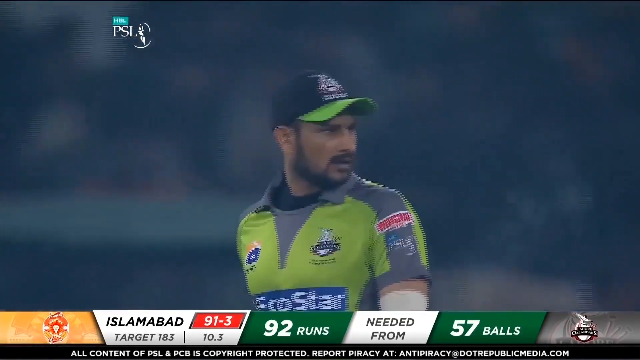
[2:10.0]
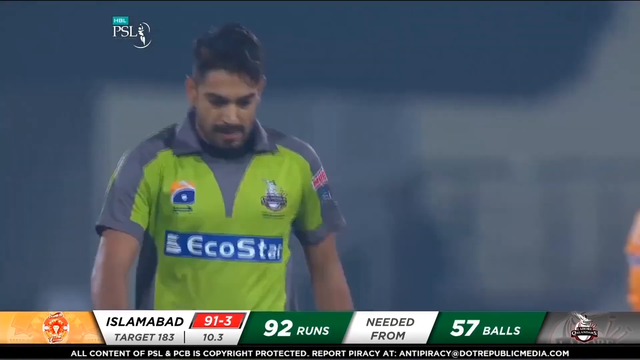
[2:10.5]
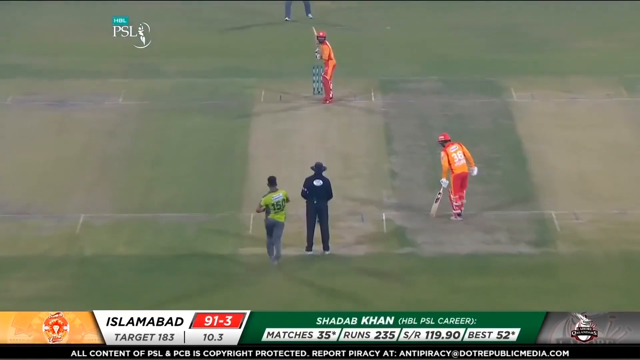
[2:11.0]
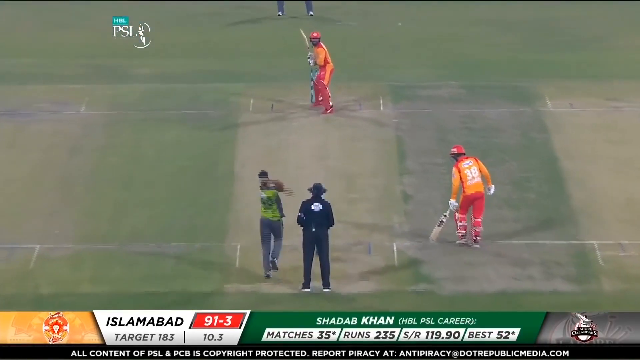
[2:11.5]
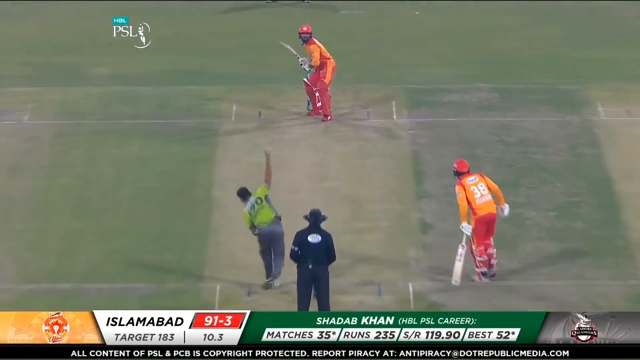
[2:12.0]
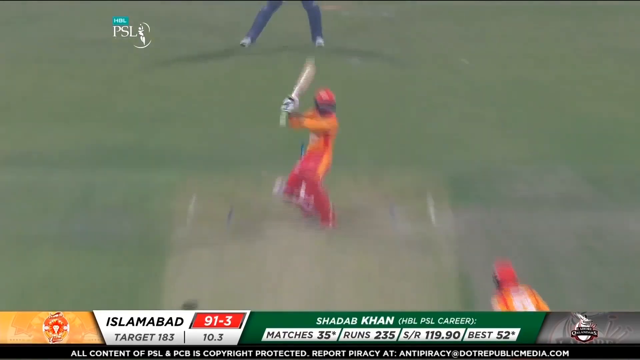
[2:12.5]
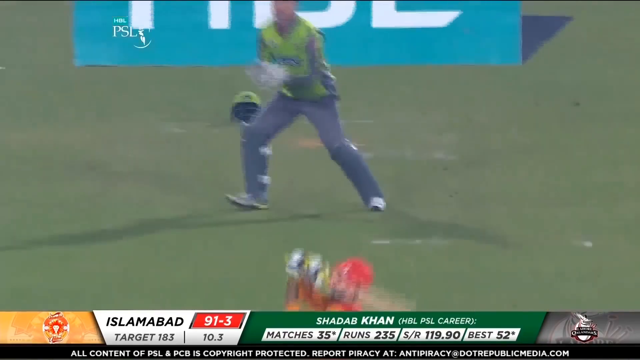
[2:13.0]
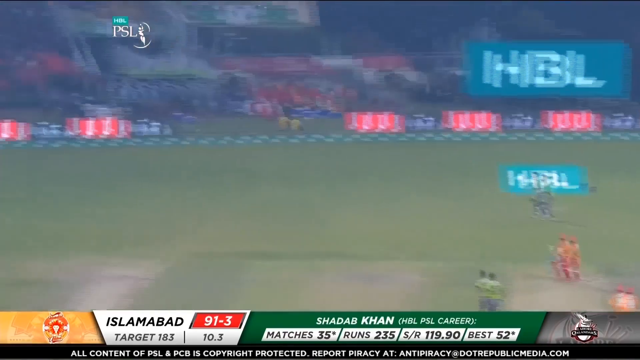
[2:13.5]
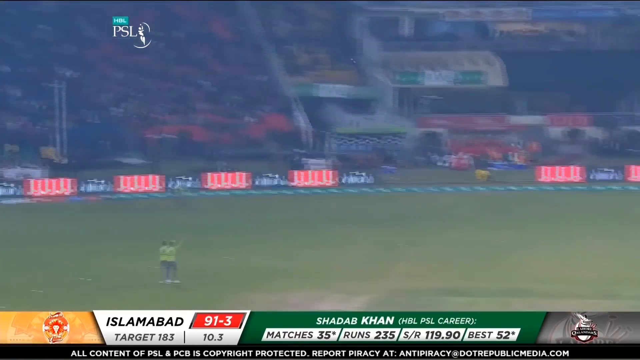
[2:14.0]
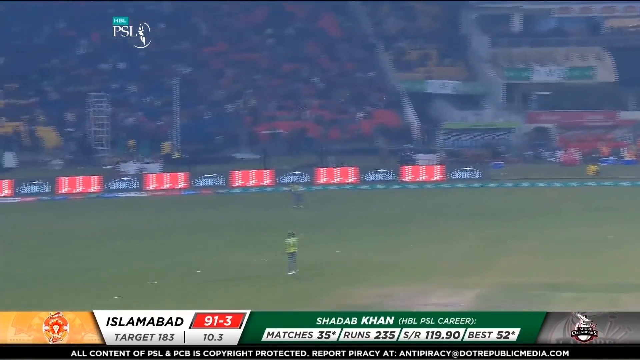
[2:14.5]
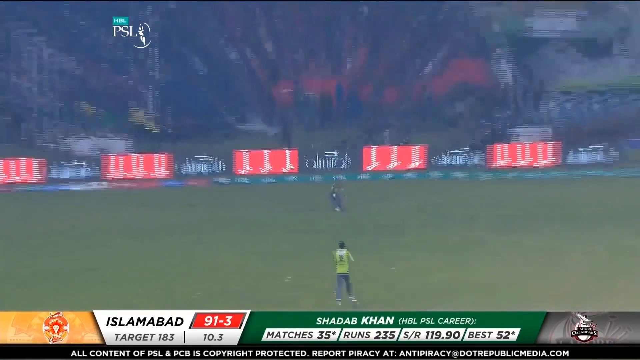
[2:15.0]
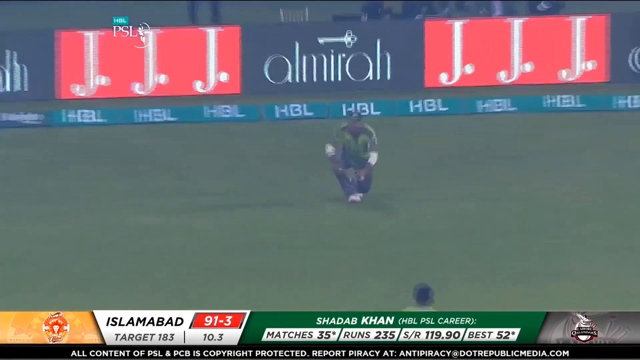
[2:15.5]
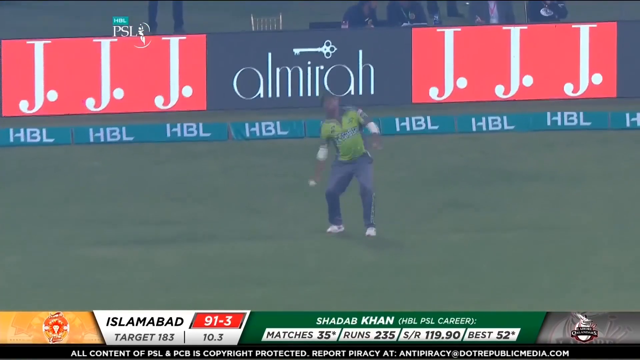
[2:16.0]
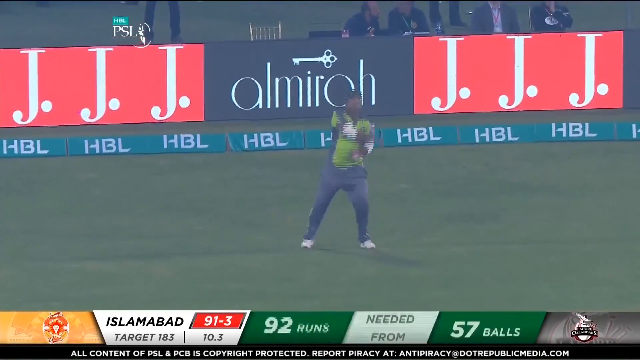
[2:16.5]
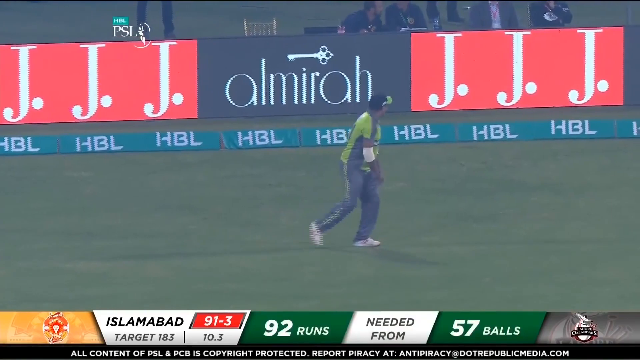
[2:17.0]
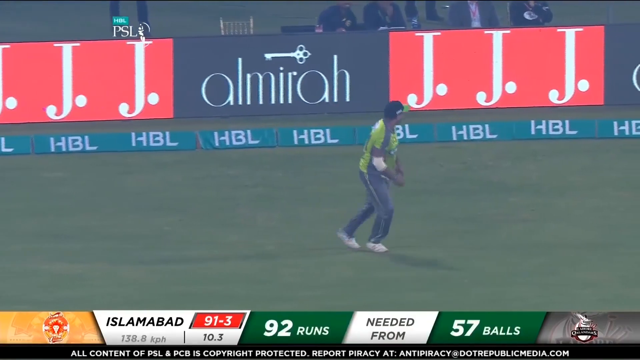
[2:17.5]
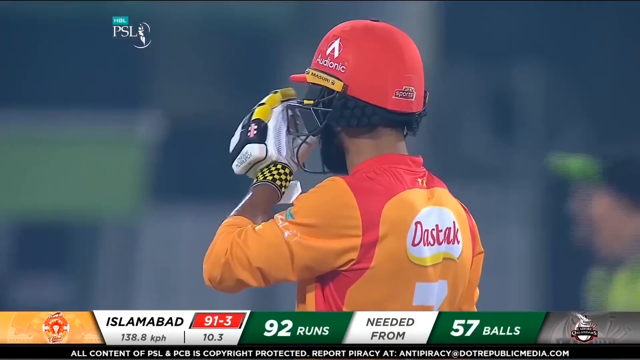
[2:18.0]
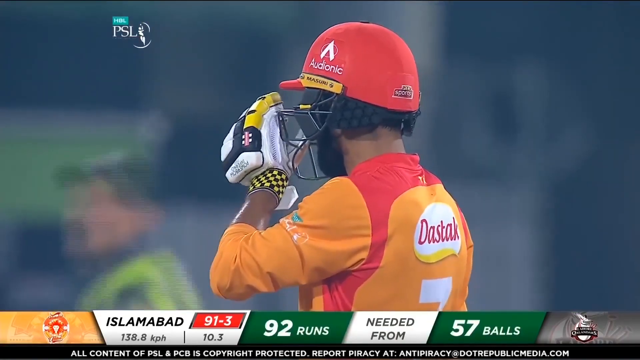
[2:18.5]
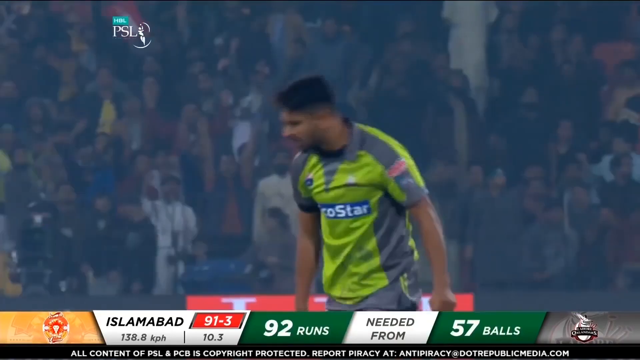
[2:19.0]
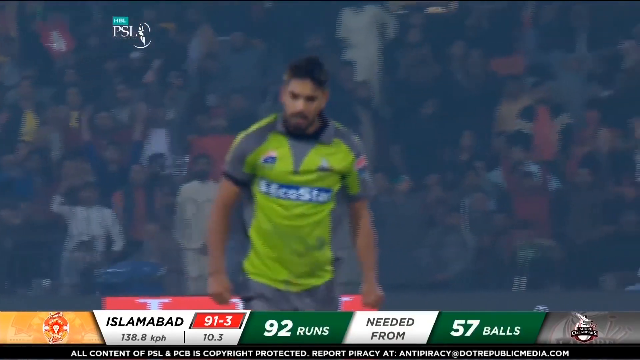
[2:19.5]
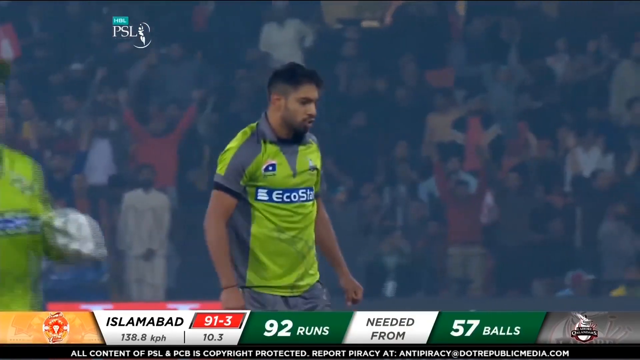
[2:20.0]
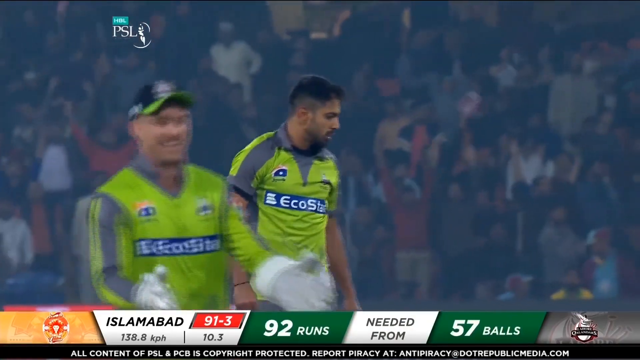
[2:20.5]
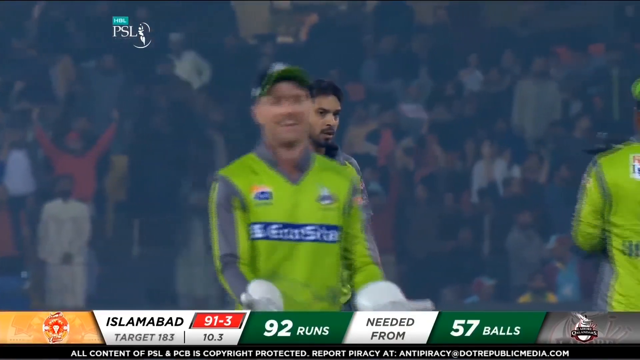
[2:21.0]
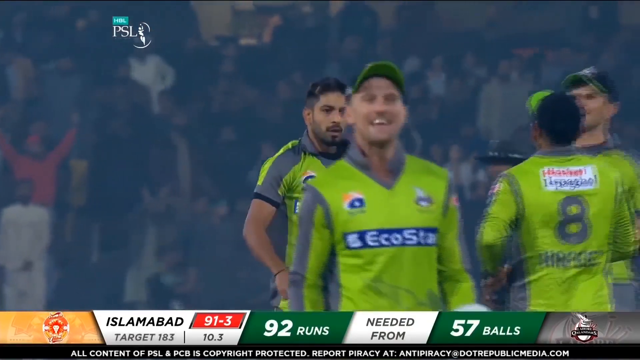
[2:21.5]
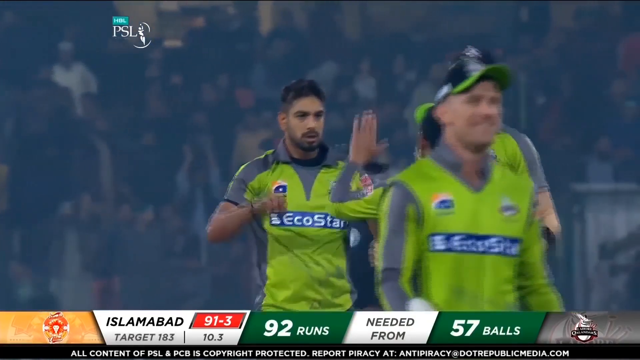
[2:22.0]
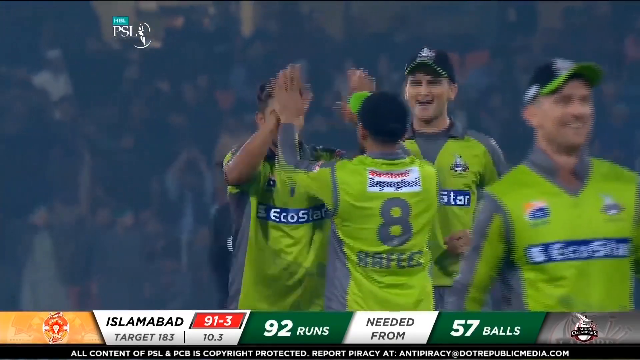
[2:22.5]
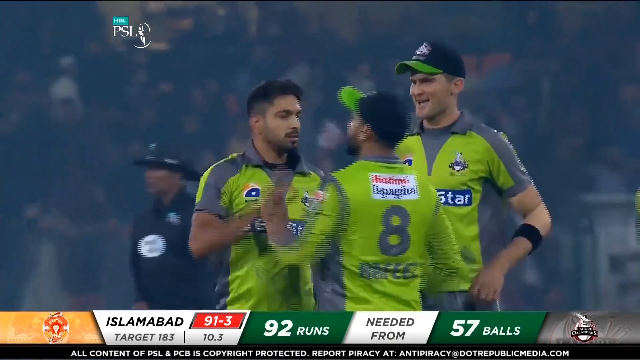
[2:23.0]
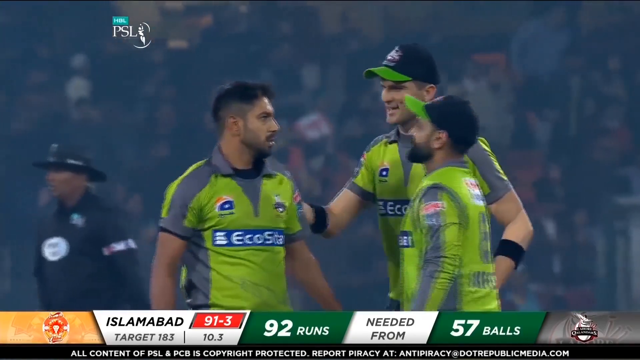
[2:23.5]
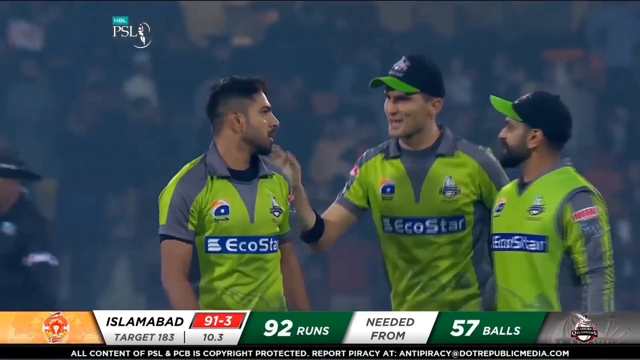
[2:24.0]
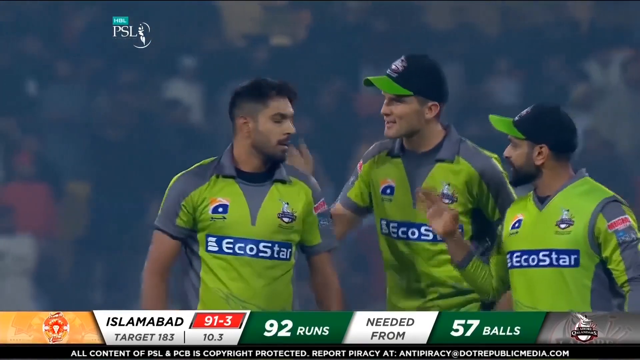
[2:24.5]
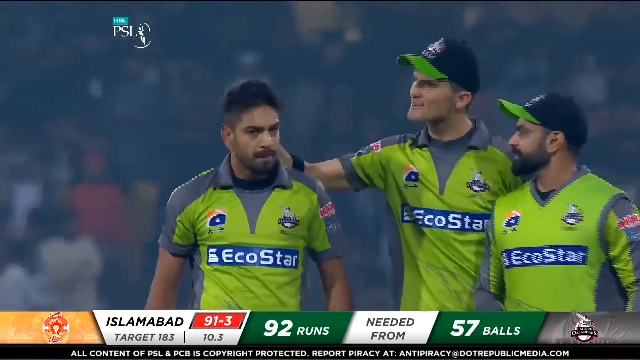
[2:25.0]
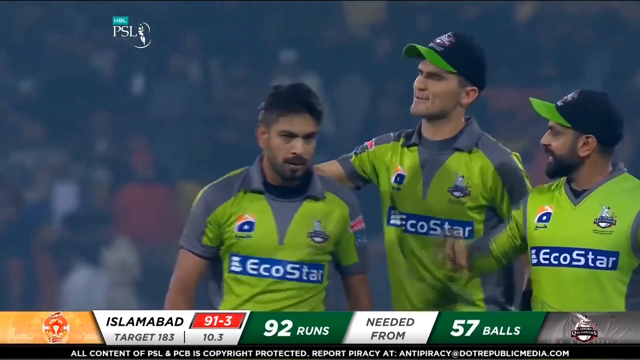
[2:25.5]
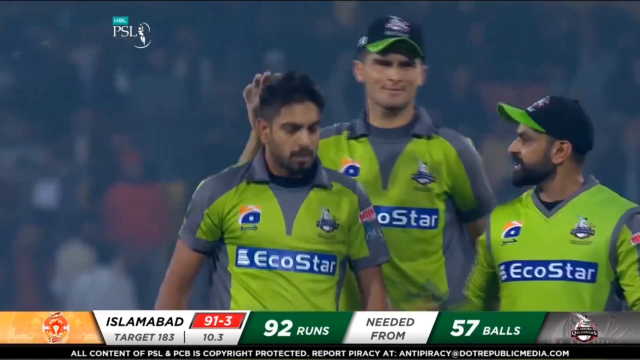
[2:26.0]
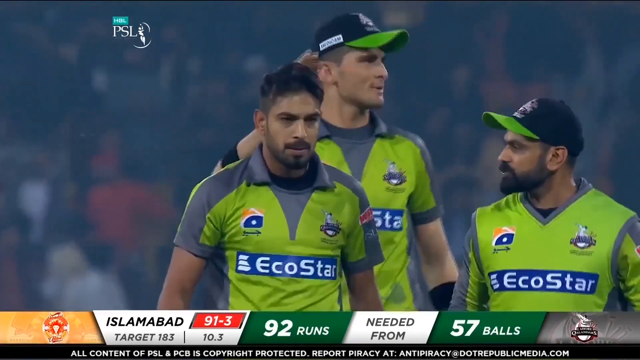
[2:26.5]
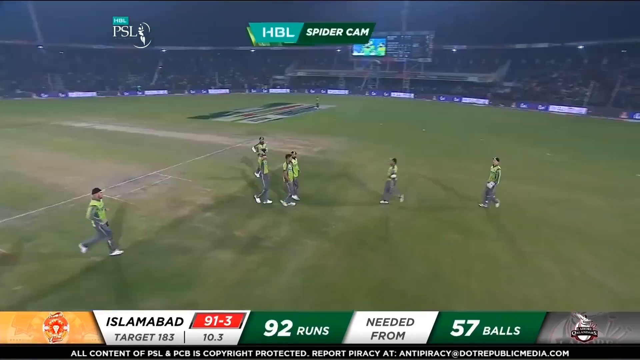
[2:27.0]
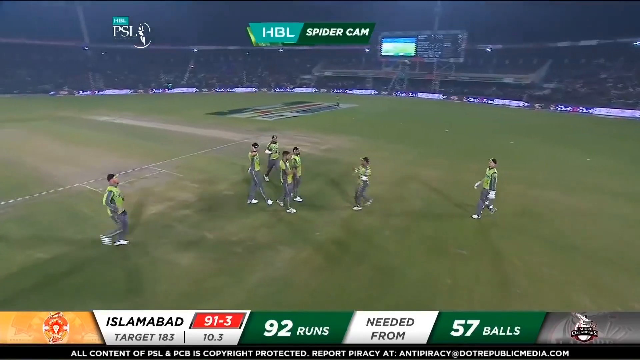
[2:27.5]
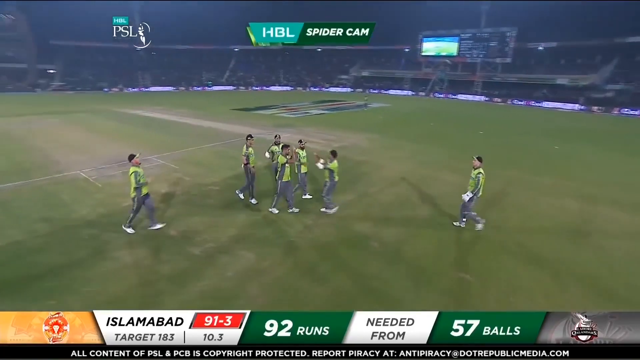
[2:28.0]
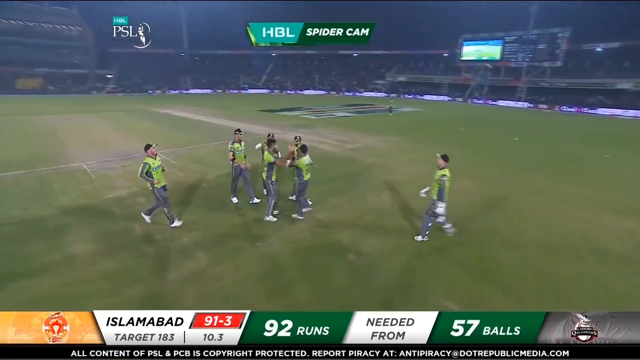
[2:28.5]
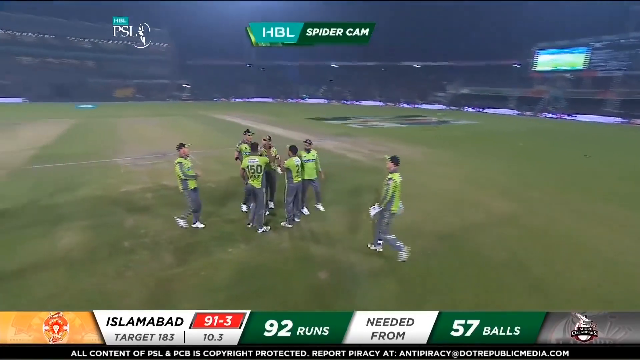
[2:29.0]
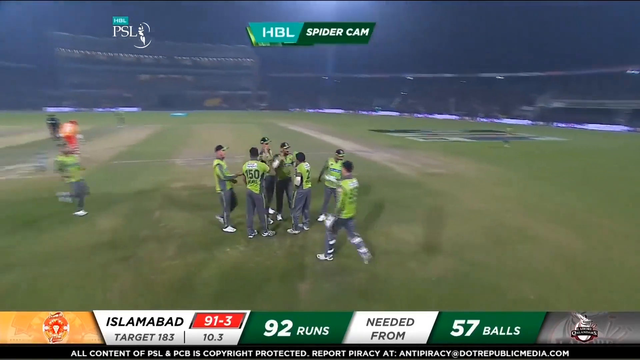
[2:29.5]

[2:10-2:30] The opposition captain walks away, not looking hugely happy. A good bit of fielding follows: an Islamabad player is caught out and the opposition celebrate the wicket. In the replay, the bowler comes in on the left-hand side of the wicket, and the batsman tries to knock the ball over the wicket keeper, hitting it rightwards, but does not clip it finely enough and hits it straight at a fielder, who takes an easy catch. The bowler high-fives one teammate, a second, taller teammate pats him on the back, and then about eight players celebrate the wicket. Islamabad still need 92 runs from 57 balls.